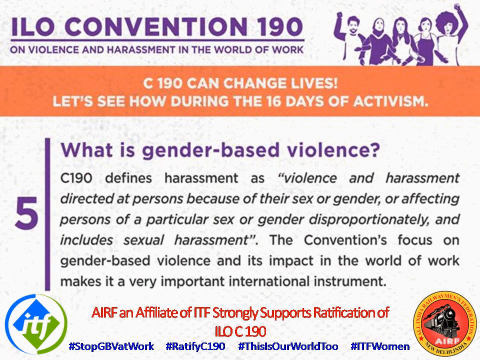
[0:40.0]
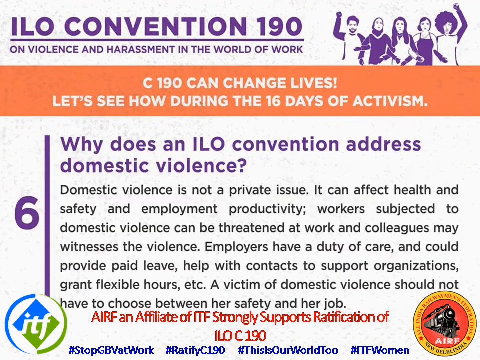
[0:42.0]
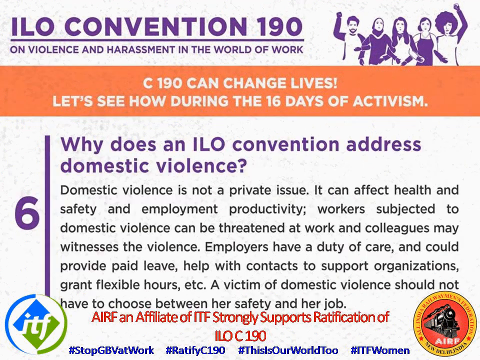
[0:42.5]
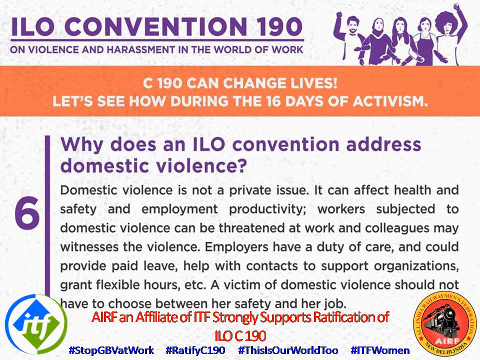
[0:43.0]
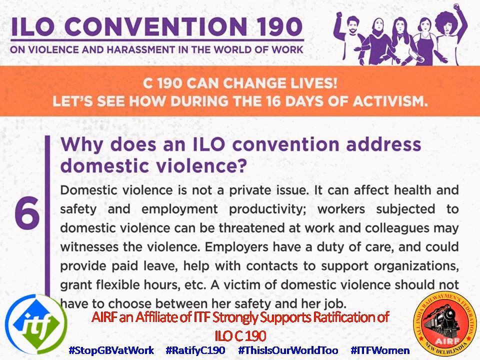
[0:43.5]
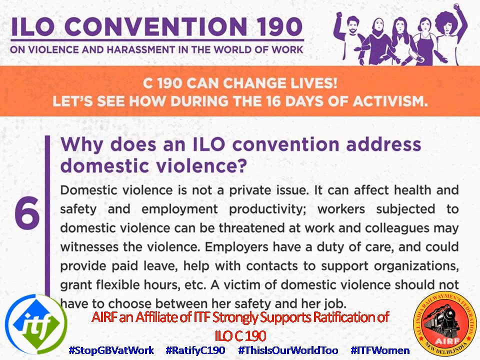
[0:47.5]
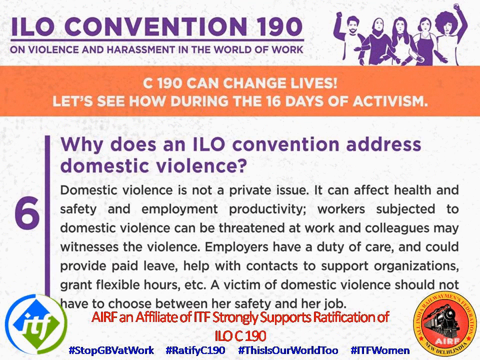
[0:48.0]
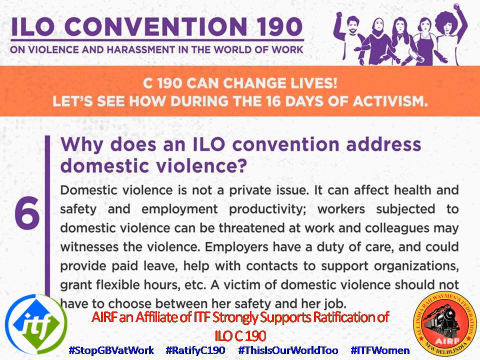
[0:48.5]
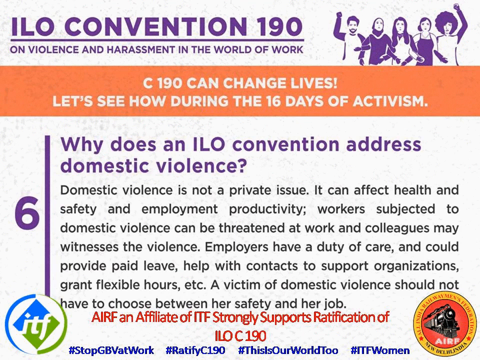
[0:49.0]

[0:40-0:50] Section 5 has a purple 5 on the left and purple text on the right: "What is gender-based violence?" Black text beneath reads "C190 defines harassment as violence and harassment directed at persons because of their sex or gender, or affecting persons of a particular sex or gender disproportionately, and includes sexual harassment. The convention's focus on gender-based violence and its impact on the world of work makes it a very important international instrument." Red text below says "AIRF, an affiliate of ITF, strongly supports ratification of ILO C190." Section 6 follows, with a purple 6 on the left and purple text on the right: "Why does an ILO convention address domestic violence?" Black text beneath reads "Domestic violence is not a private issue. It can affect health and safety and employment productivity. Workers subjected to domestic violence can be threatened at work, and colleagues may witness the violence. Employers have a duty of care and could provide paid leave, help with contacts to support organizations, grant flexible hours, et cetera. A victim of domestic violence should not have to choose between her safety and her job." The red AIRF text appears beneath it, and Section 7 comes next.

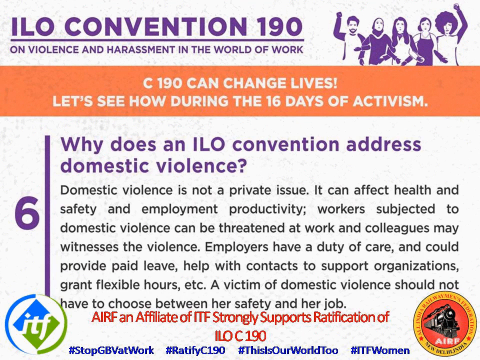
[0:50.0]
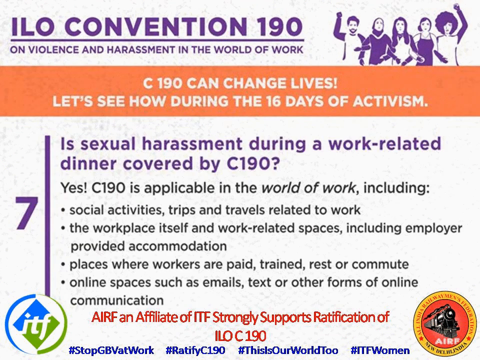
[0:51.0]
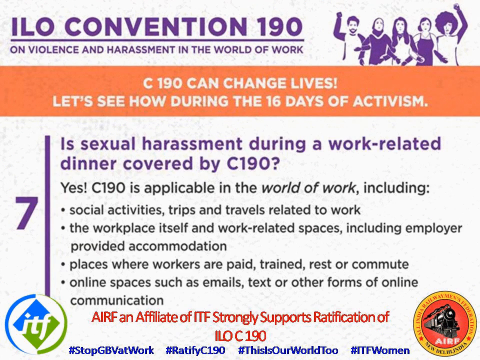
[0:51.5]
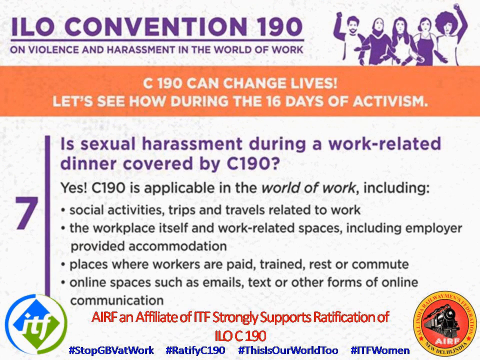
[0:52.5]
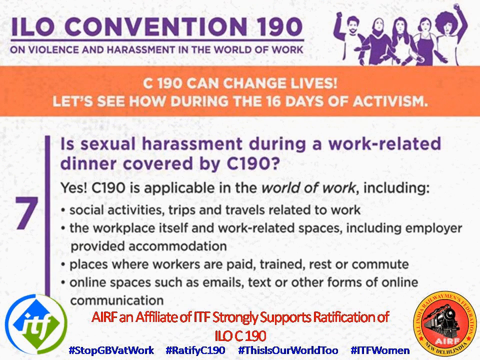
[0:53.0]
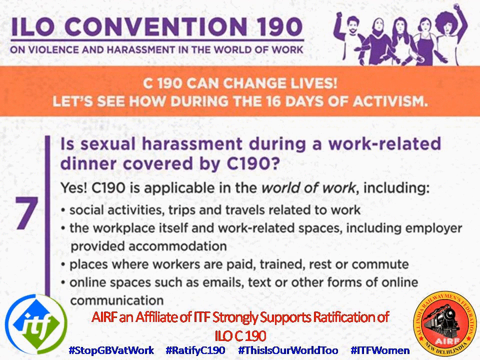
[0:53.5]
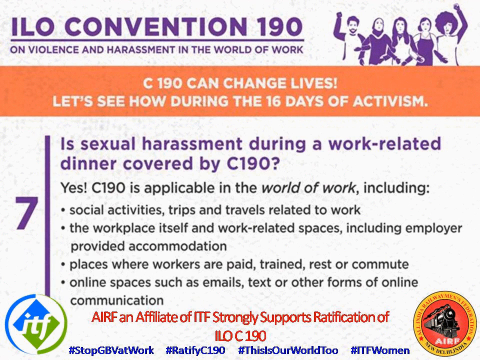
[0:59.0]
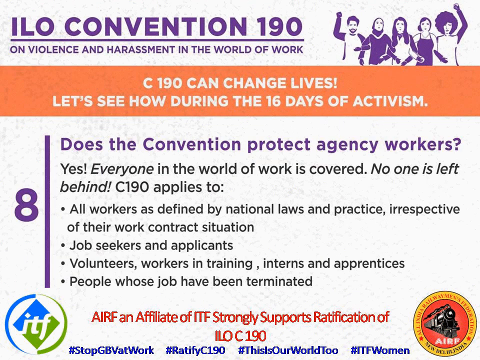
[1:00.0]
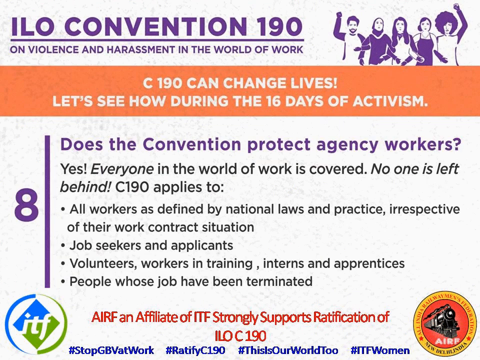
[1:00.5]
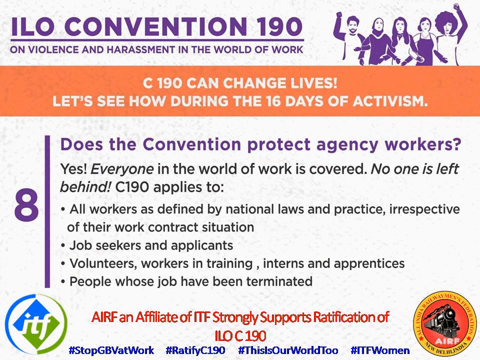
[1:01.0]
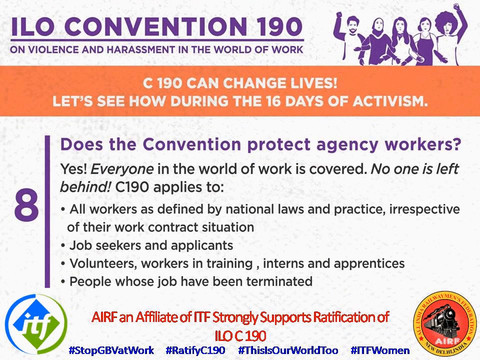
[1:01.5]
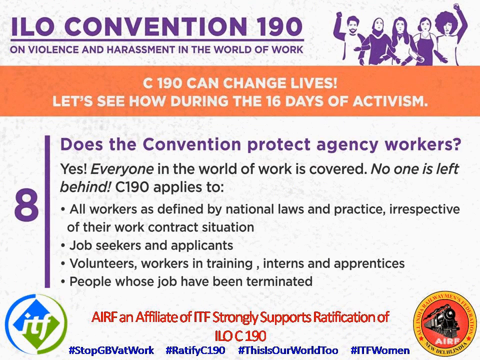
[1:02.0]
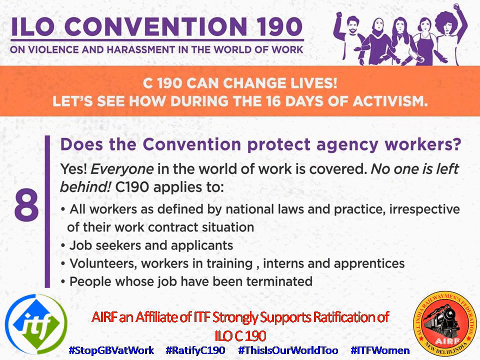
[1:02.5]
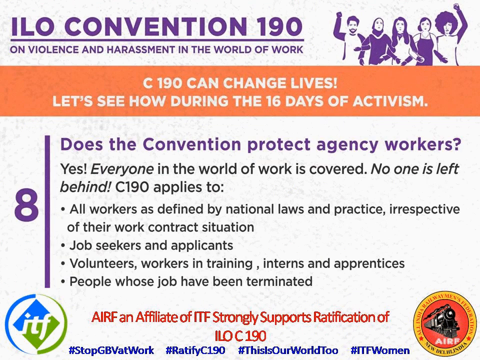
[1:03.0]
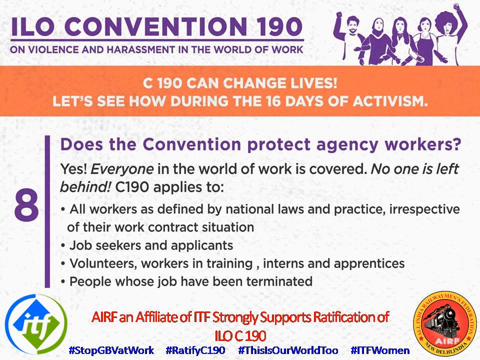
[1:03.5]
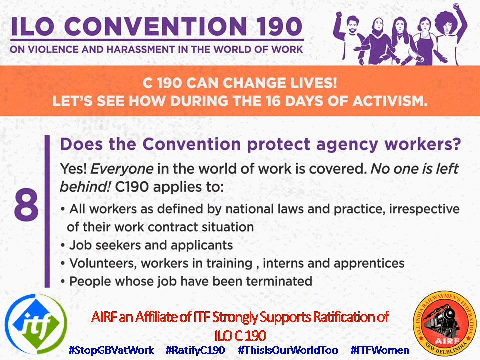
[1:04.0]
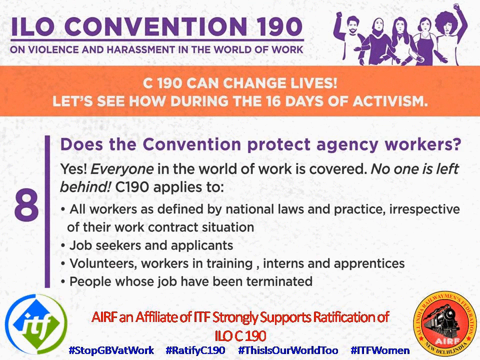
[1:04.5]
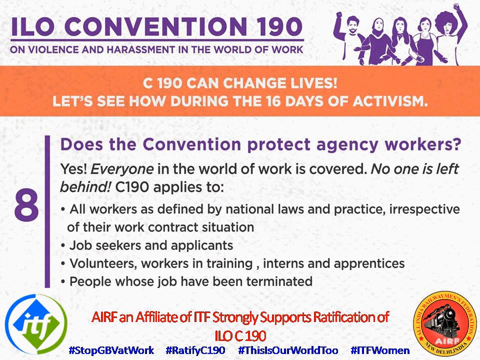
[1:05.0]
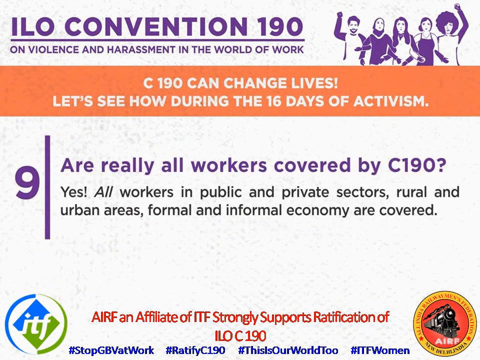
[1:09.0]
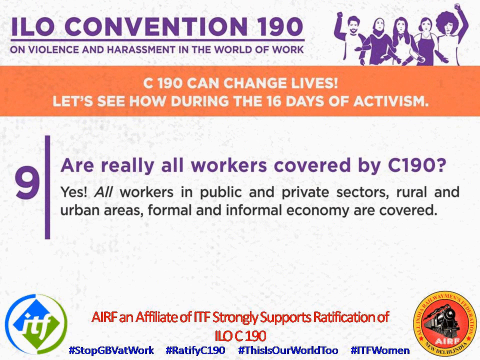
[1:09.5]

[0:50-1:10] Section 7 has a purple 7 on the left and a purple header on the right: "Is sexual harassment during a work-related dinner covered by C190?" Black text beneath reads "Yes. C190 is applicable in the world of work, including social activities, trips, and travels related to work, the workplace itself, and work-related spaces, including employer-provided accommodation, places where workers are paid, trained, rest, or commute, online spaces such as emails, text, or other forms of online communication." Red text below states "AIRF, an affiliate of ITF, strongly supports ratification of ILO C190." Section 8 follows, with a purple 8 on the left and purple text on the right: "Does the convention protect agency workers?" Black text beneath states "Yes. Everyone in the world of work is covered. No one is left behind. C190 applies to all workers as defined by national laws and practice irrespective of their work contract situation. Job seekers and applicants, volunteers, workers in training, interns, and apprentices. People whose job have been terminated." The red AIRF text appears beneath it. Below that is section 9, with a purple 9 on the left.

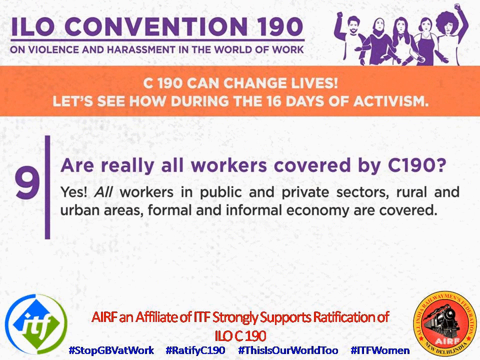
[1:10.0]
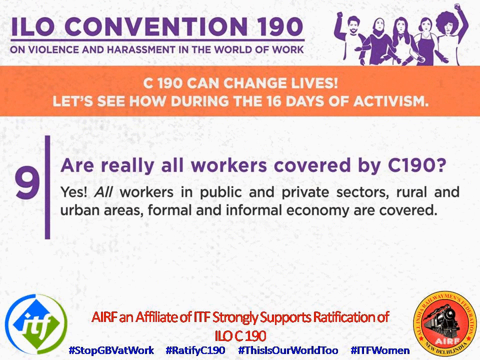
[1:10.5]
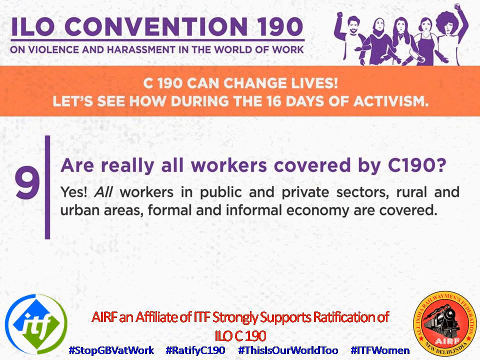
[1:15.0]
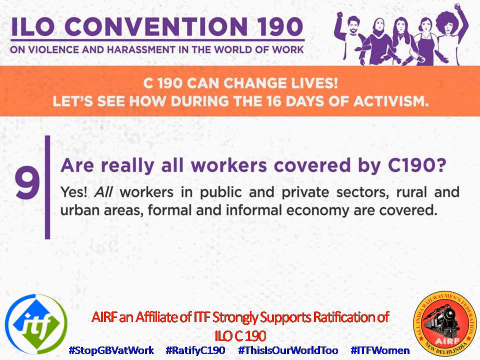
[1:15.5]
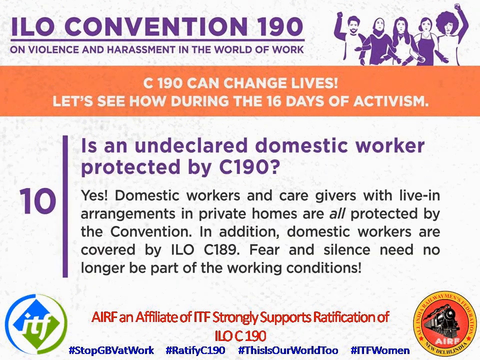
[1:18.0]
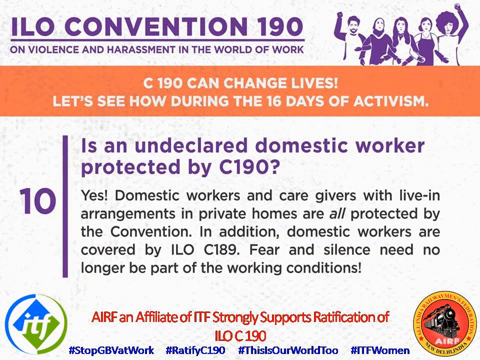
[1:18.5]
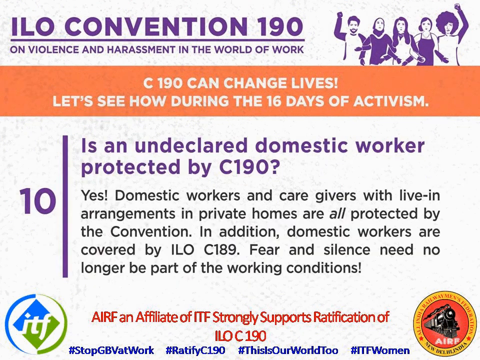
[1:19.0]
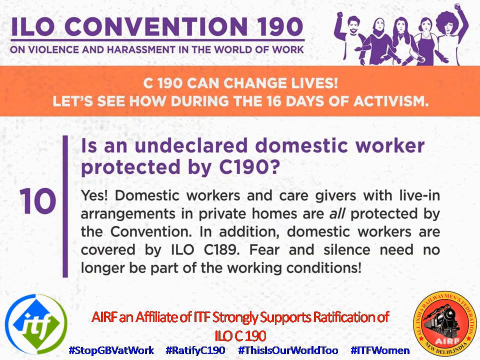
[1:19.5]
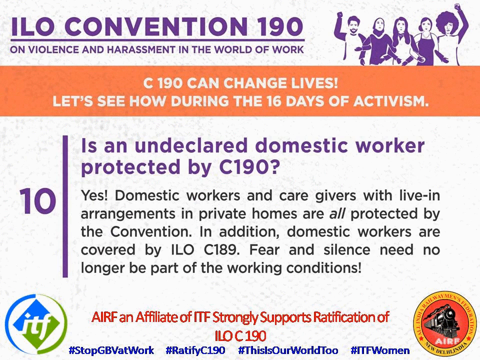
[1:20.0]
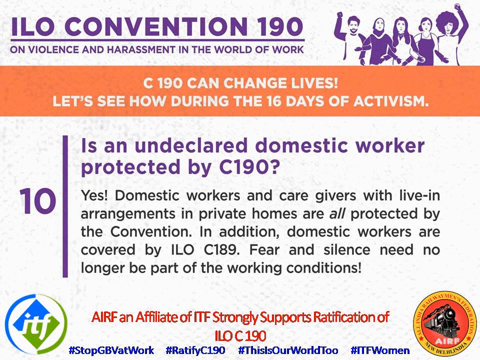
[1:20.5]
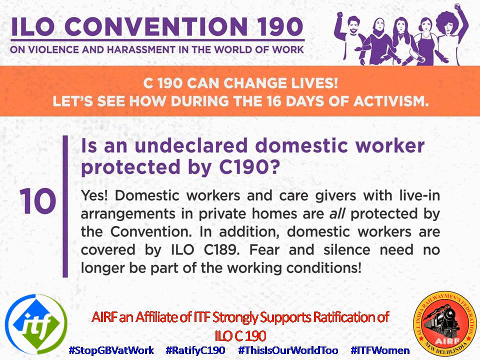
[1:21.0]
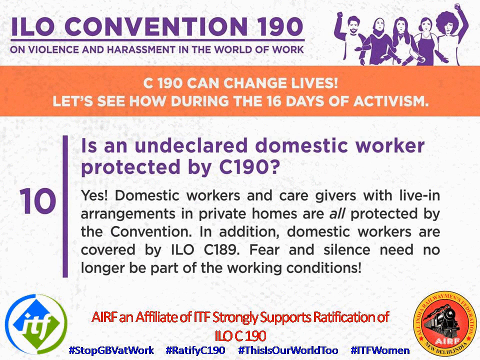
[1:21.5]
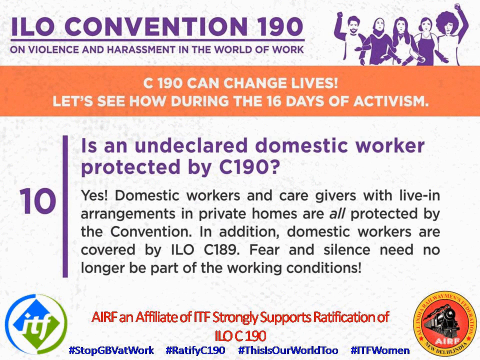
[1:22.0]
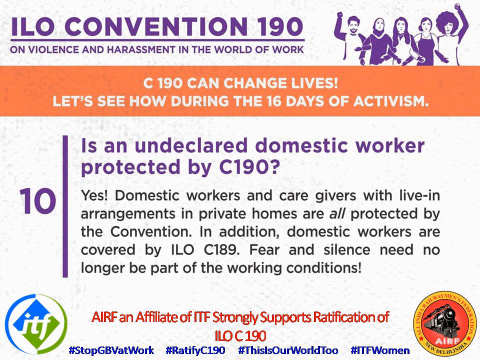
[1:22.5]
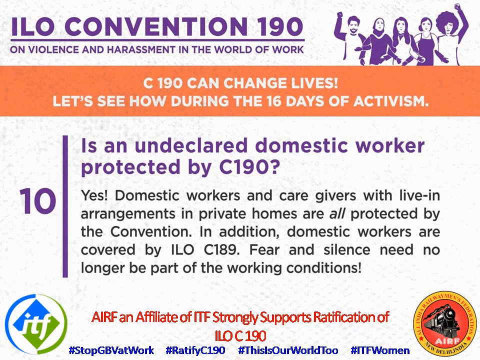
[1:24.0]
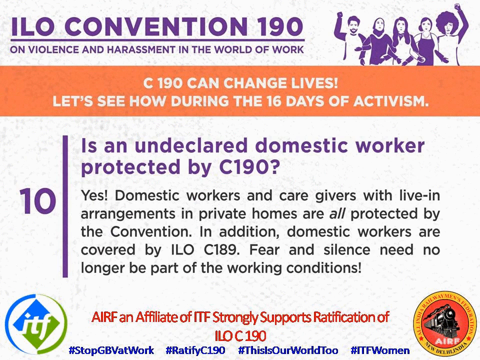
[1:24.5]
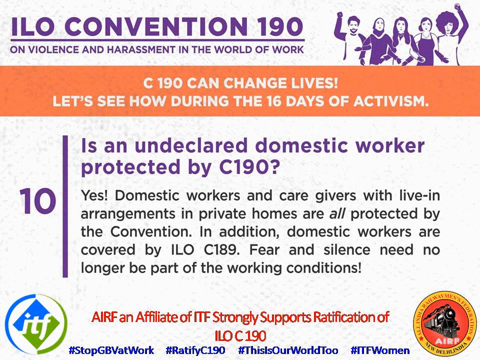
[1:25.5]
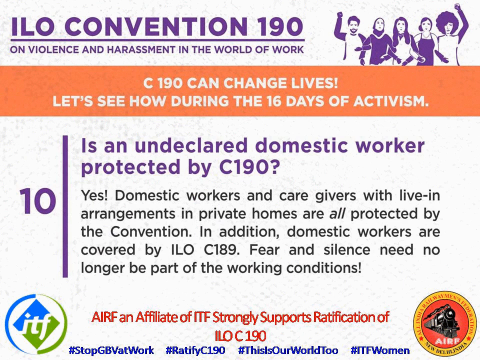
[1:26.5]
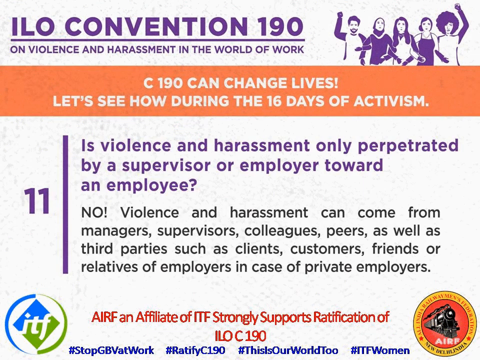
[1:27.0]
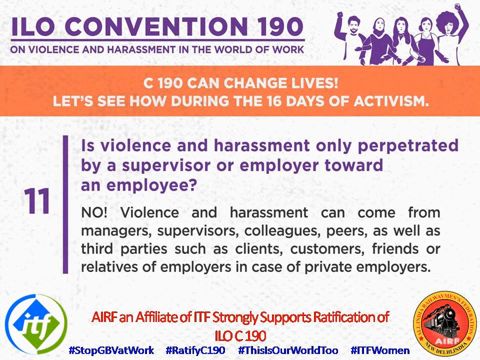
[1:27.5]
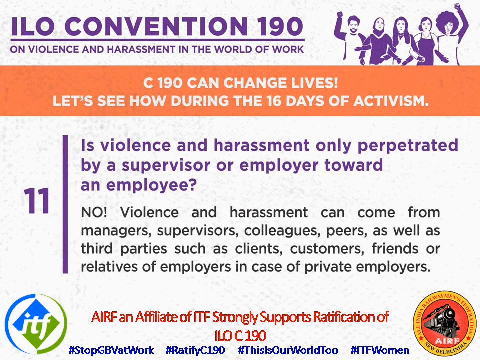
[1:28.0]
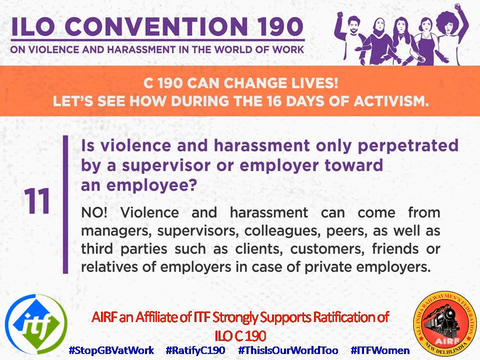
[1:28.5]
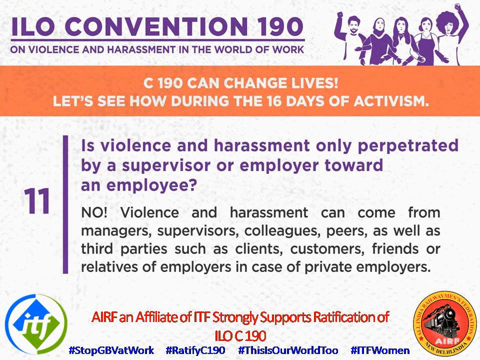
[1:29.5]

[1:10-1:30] Section 9 has a purple 9 on the left, followed on the right by a purple header: "Are really all workers covered by C190?" Black text beneath reads "Yes. All workers in public and private sectors, rural and urban areas, formal and informal economy are covered." Below is an open white space, then red text: "AIRF, an affiliate of ITF, strongly supports the ratification of ILOC 190." Section 10 has a purple 10 on the left and purple text on the right: "Is an undeclared domestic worker protected by C190?" Black text beneath reads "Yes. Domestic workers and caregivers with live-in arrangements in private homes are all protected by the convention. In addition, domestic workers are covered by ILOC 189. Fear and silence need no longer be part of the working conditions." A small open white space follows, then the red text "AIRF, an affiliate of ITF, strongly supports ratification of ILOC 190." Section 11 has a purple 11 on the left and a purple header on the right: "Is violence and harassment only perpetrated by a supervisor or employer toward an employee?" Black text beneath reads "No. Violence and harassment can come from managers, supervisors, colleagues, peers, as well as third parties such as clients, customers, friends, or relatives of employees in case of private employers." An open white space and the red AIRF text follow. Section 12 comes next, with a purple 12 on the left and more purple lettering to its right.